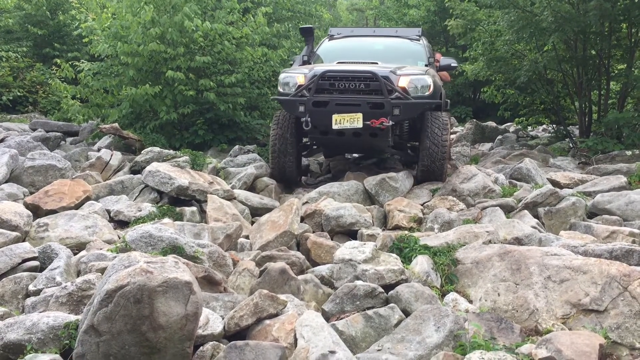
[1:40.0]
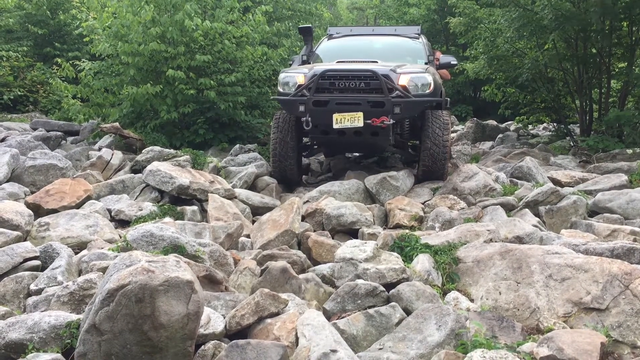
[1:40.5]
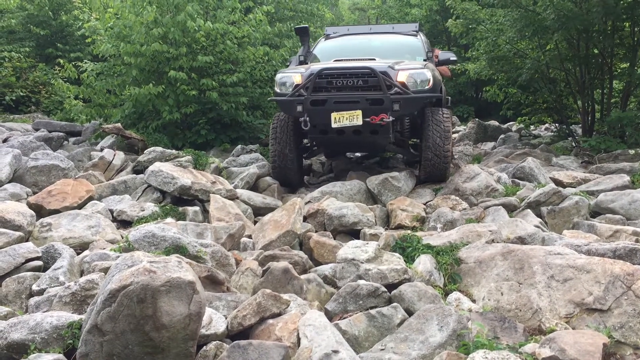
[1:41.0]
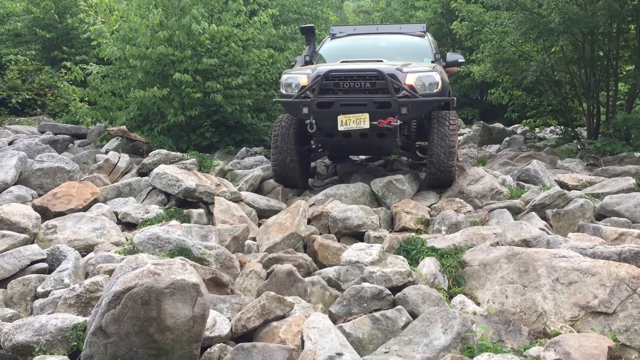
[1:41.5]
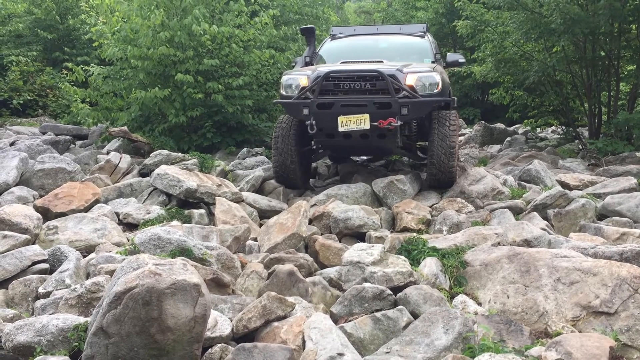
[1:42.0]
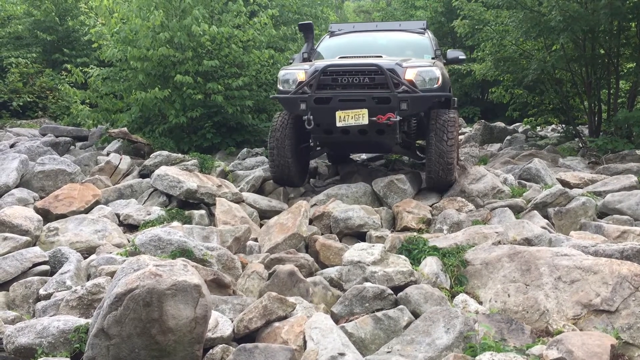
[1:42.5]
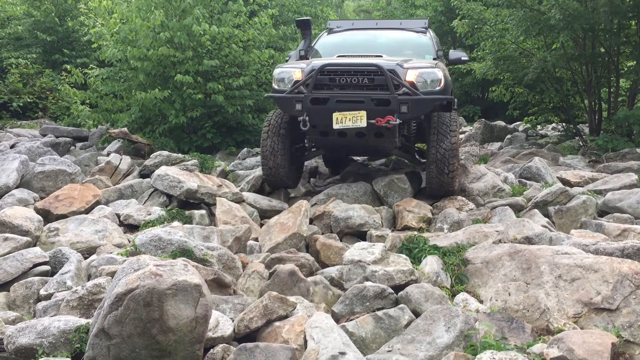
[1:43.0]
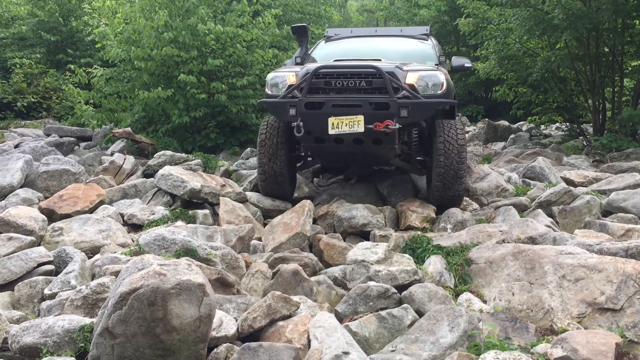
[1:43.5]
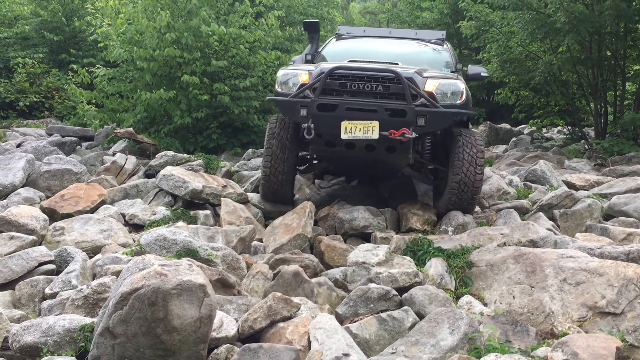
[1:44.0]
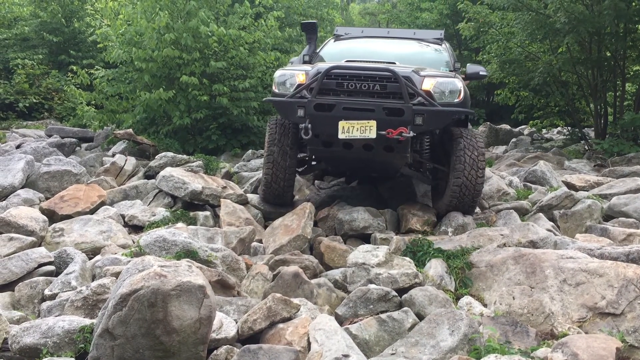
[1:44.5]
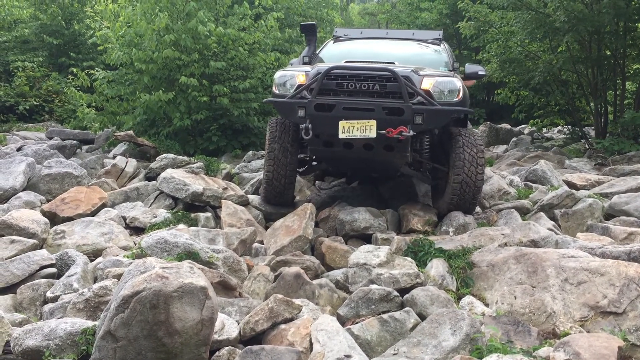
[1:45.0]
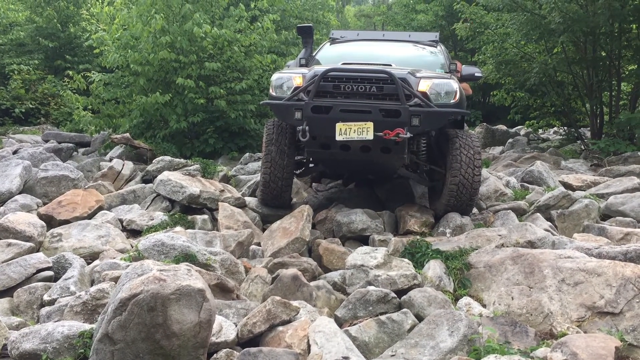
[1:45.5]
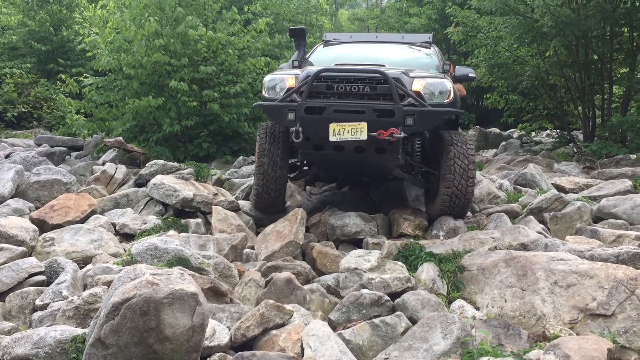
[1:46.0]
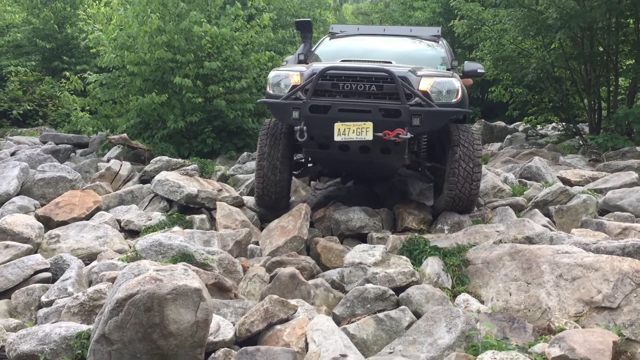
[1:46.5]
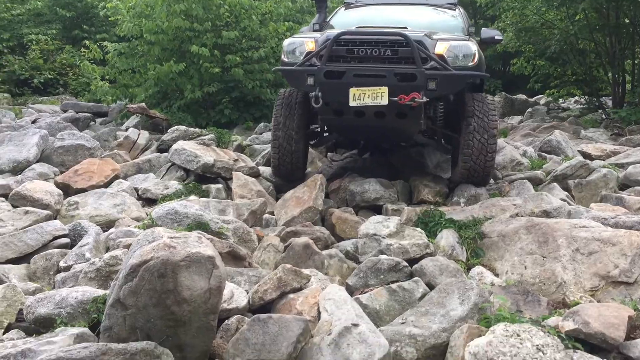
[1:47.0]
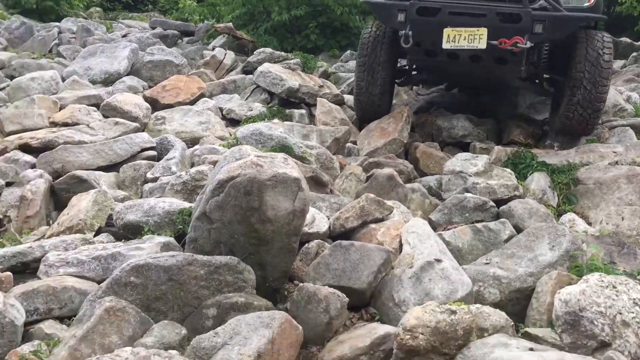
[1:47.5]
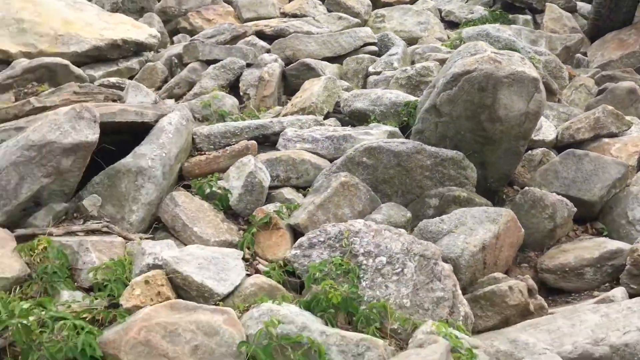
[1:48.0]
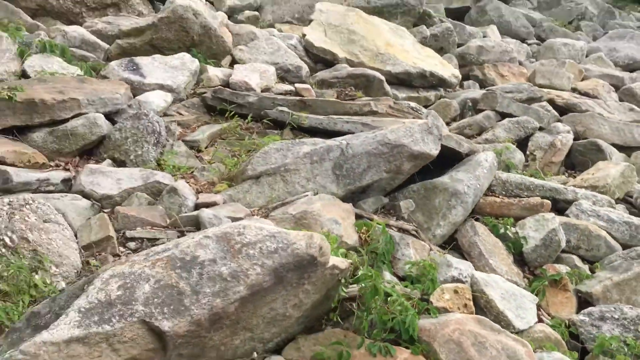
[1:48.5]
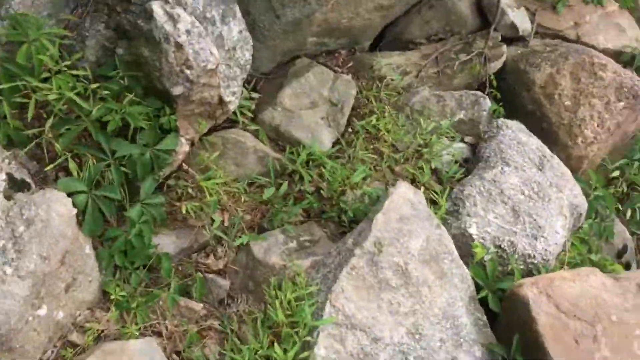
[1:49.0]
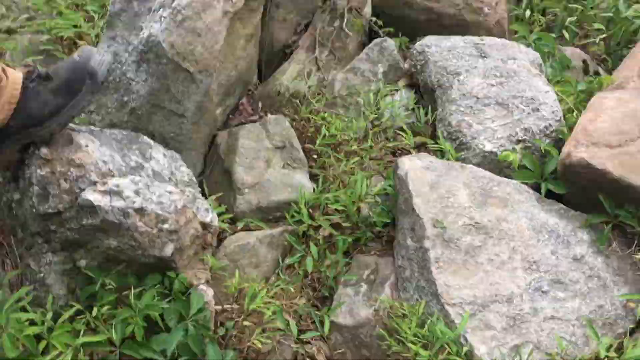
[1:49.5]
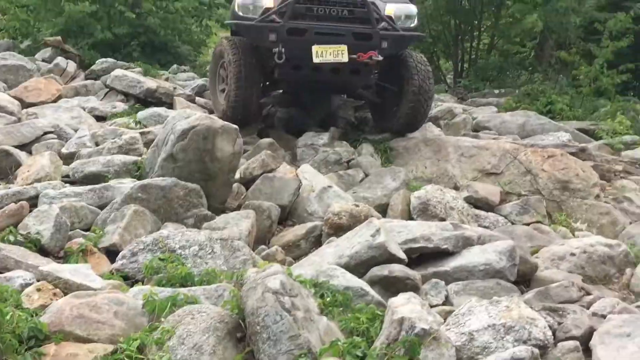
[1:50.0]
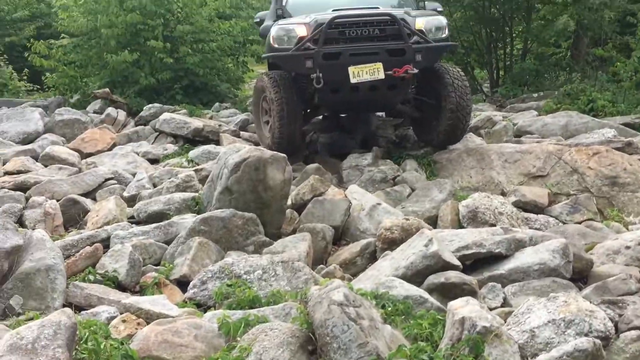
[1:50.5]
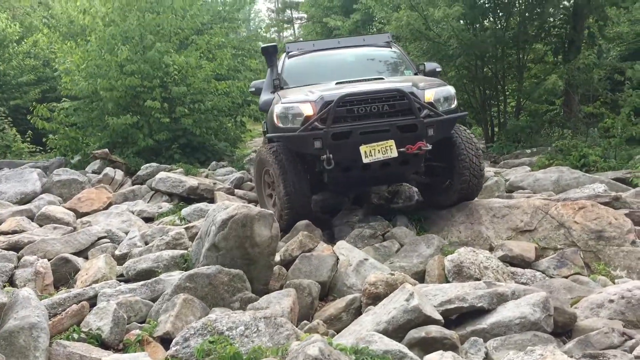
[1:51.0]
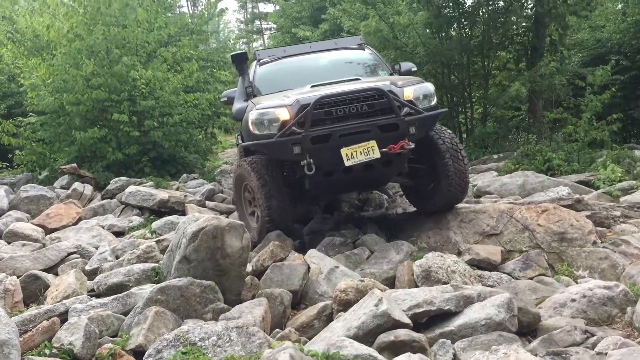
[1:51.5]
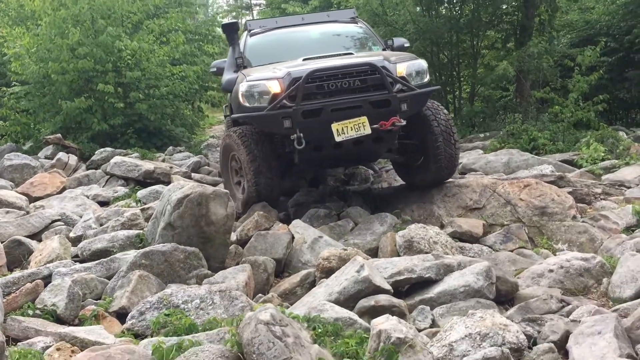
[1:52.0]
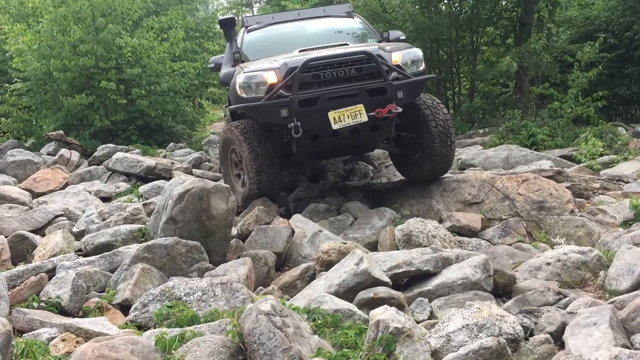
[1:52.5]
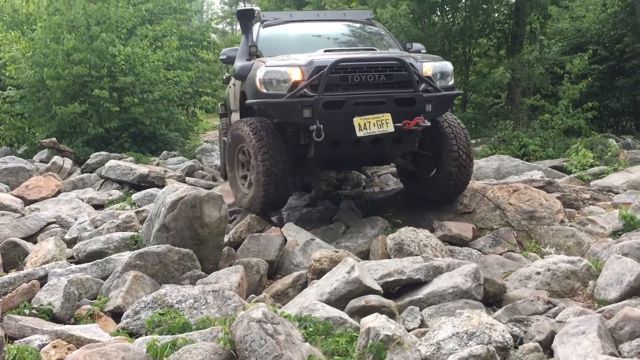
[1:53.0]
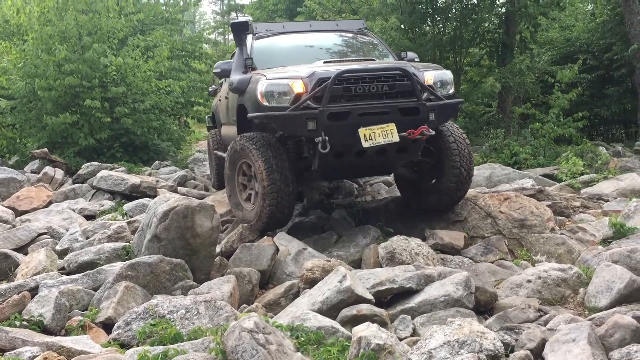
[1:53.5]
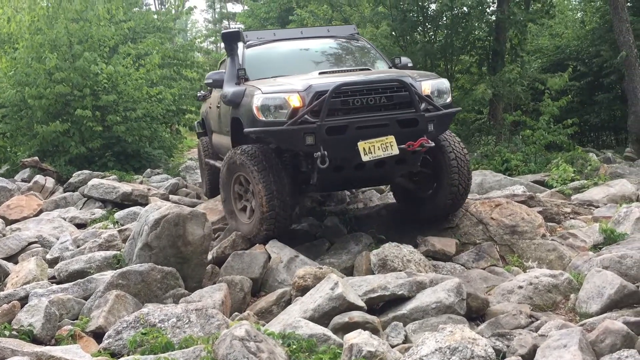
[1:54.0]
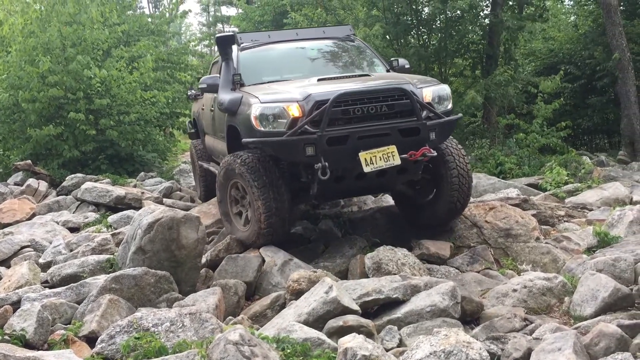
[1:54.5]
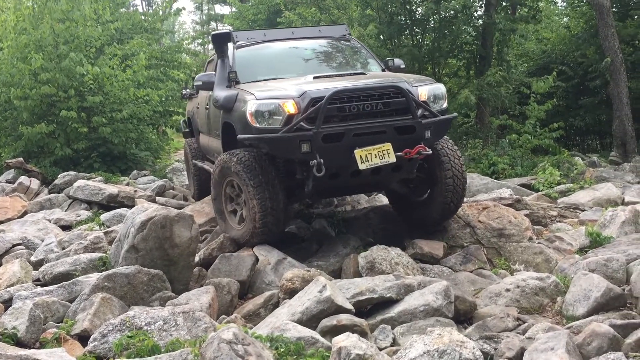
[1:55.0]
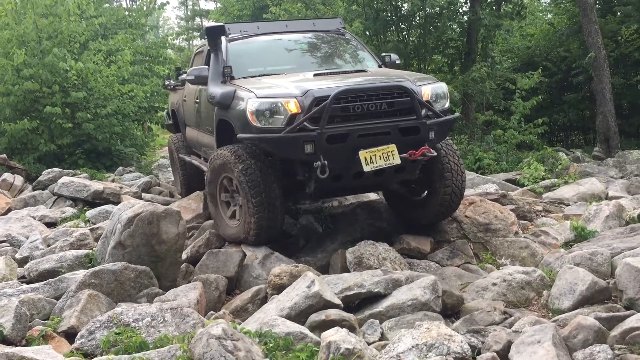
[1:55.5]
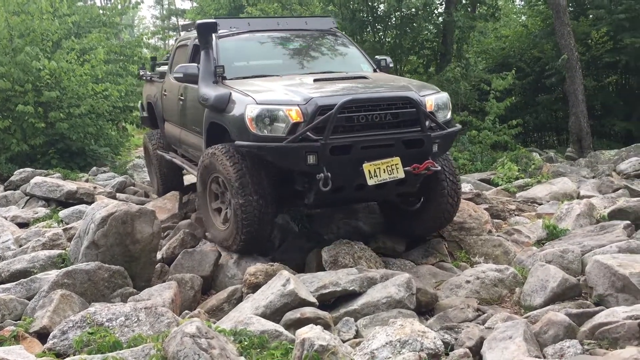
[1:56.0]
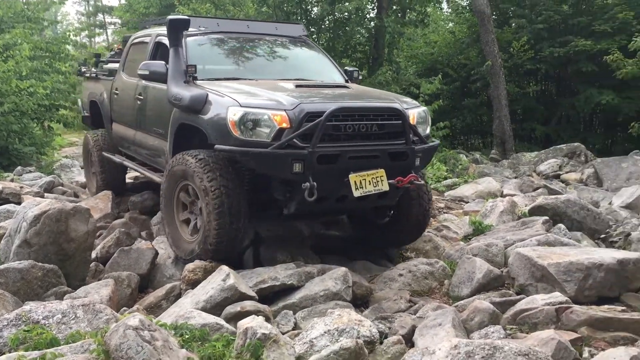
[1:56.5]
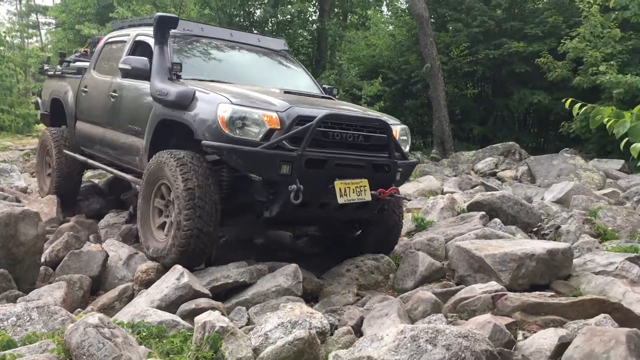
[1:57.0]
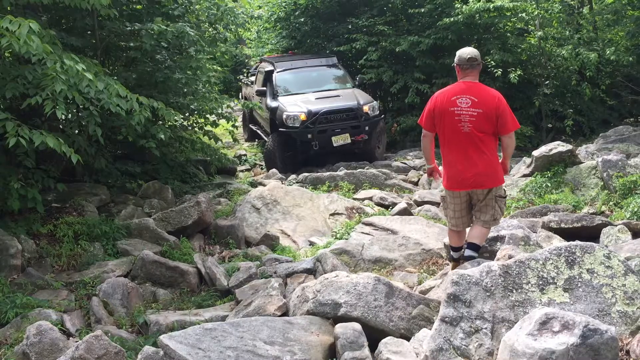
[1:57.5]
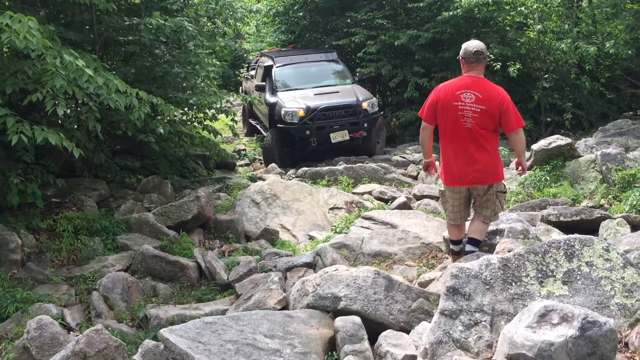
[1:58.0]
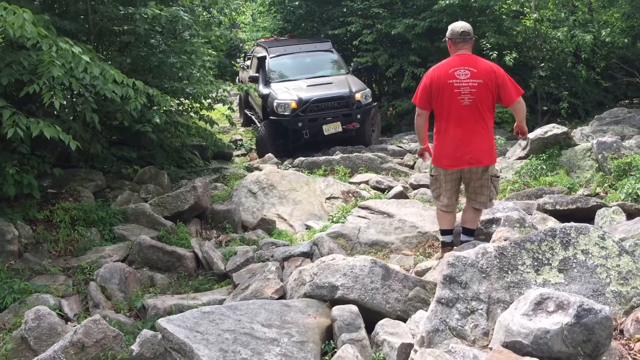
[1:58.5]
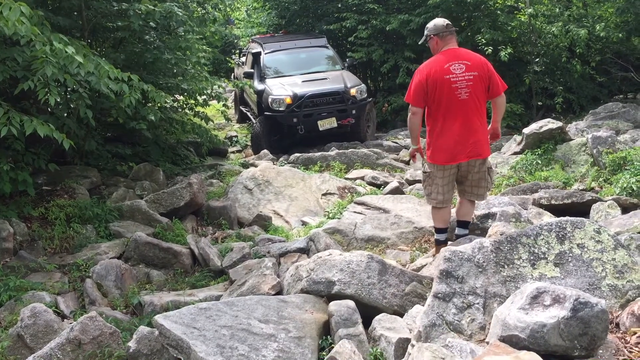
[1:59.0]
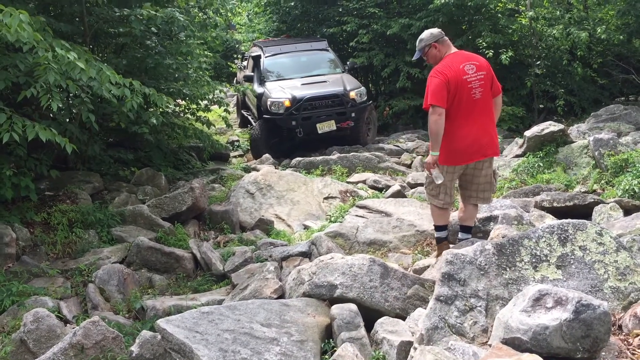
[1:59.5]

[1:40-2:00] The man in the truck is on the big jagged rocks, his head and elbow hanging out of the driver's side window. He looks forward and down, trying to find the best path, his head blocked a little by the black rear view window. He goes super slowly, and the truck kind of shakes back and forth as it hits the jagged rocks. He makes it over a little pile and drops down a little. The camera pans down and to the left until the truck is out of view, showing some of the rocks; the camera operator looks like he is backing up a little from the truck. The truck is now much closer, probably 20 feet away, with its driver's side front on a big jagged rock, so he takes it extra slowly. The wheels are slightly turned to the right. As he pushes the gas, the truck comes across and goes down, now dangling to the right. The video cuts to another view from up on a little bit of a slope. The truck is at the bottom, kind of deeper into the image toward the top of the screen. Just right of center, a man in a red shirt, brown hat, checkered brown pants, and black and white striped socks stands about 20 feet from the truck, in front of the cameraman. As the truck comes forward a little, the man sidesteps slightly to the left and looks down to check his footing.